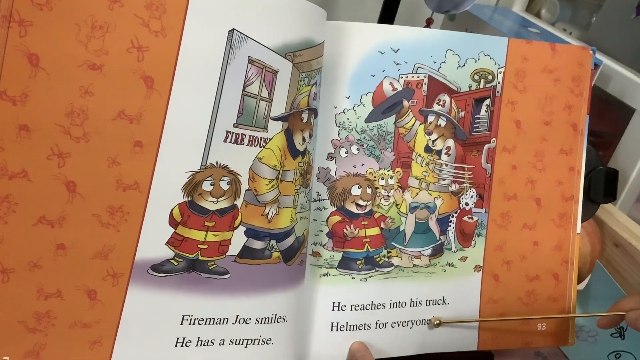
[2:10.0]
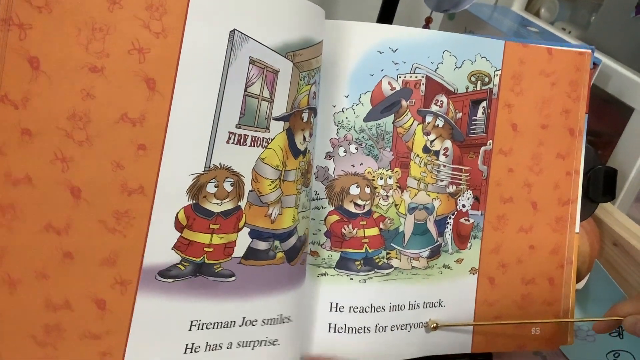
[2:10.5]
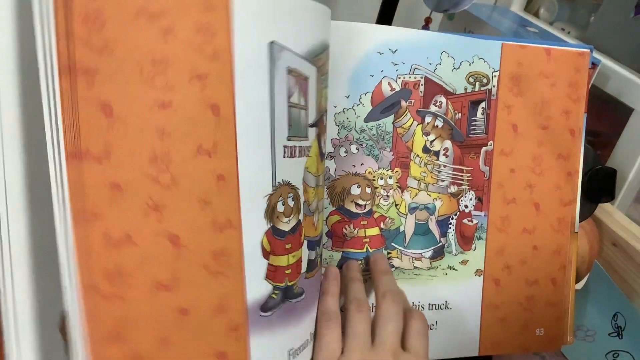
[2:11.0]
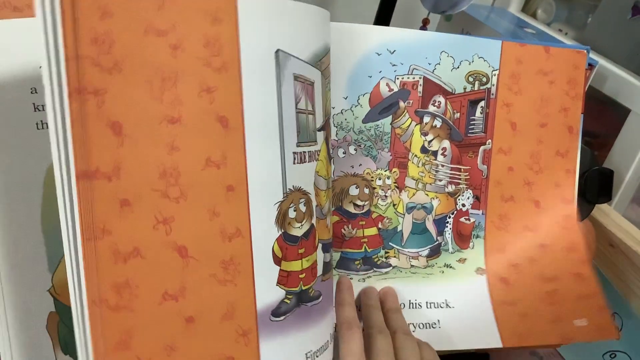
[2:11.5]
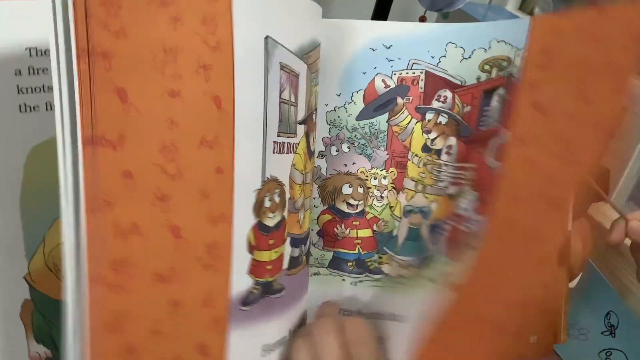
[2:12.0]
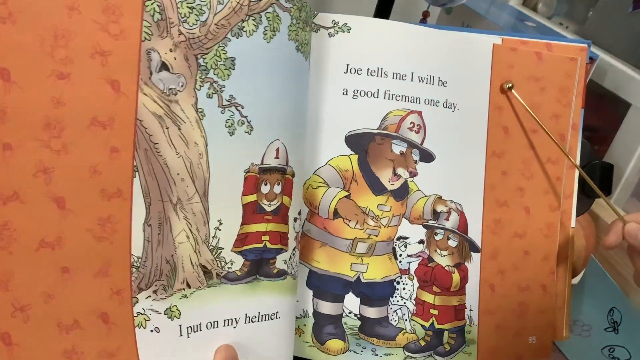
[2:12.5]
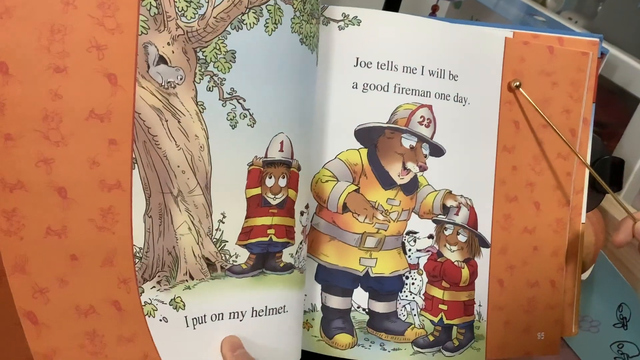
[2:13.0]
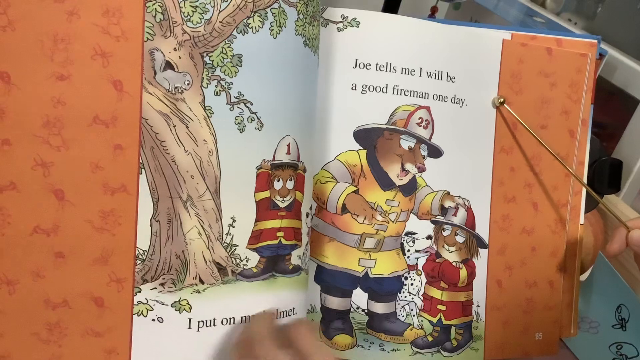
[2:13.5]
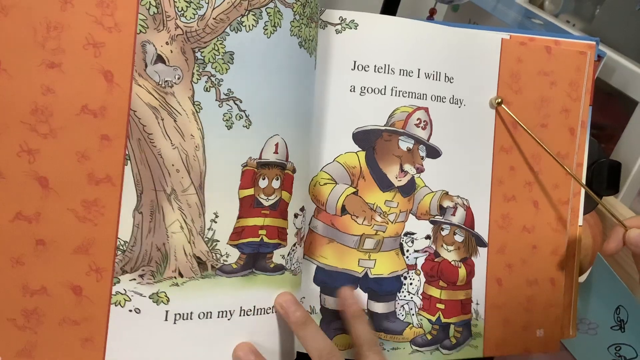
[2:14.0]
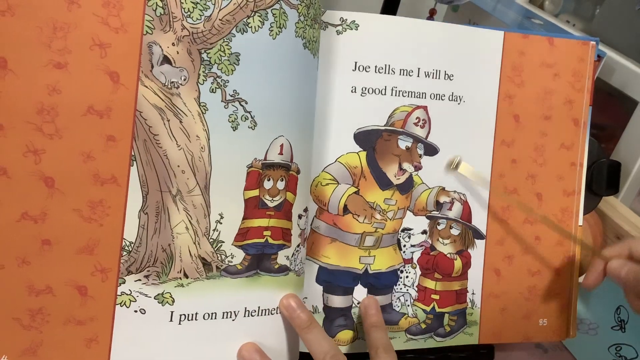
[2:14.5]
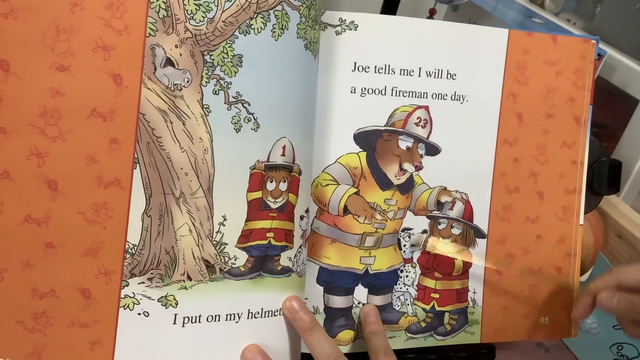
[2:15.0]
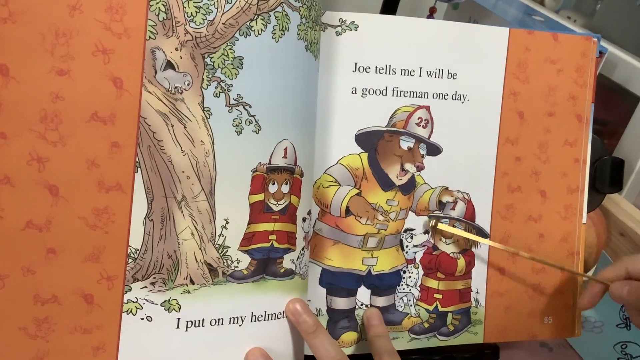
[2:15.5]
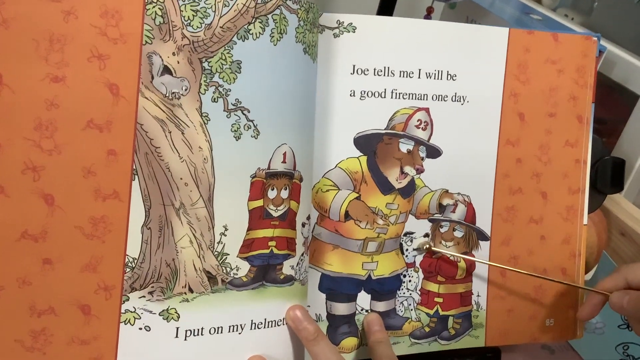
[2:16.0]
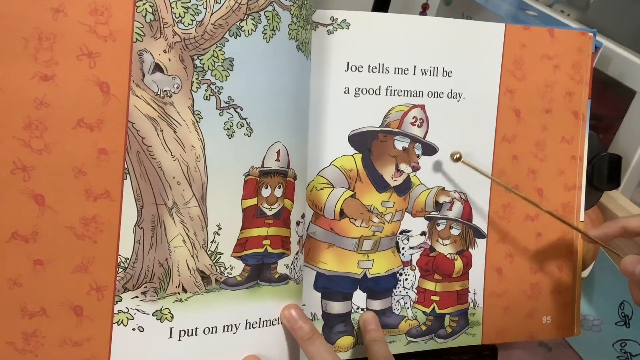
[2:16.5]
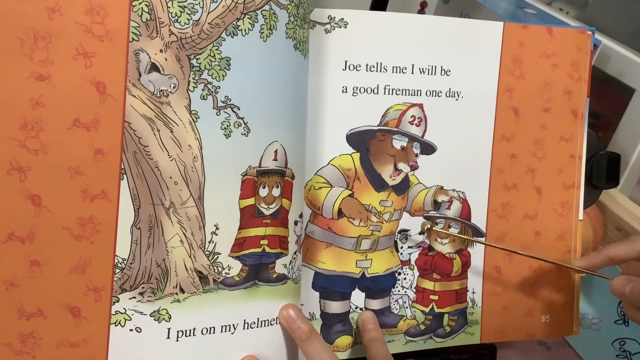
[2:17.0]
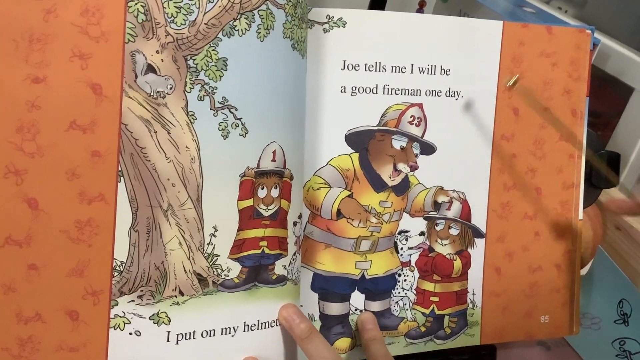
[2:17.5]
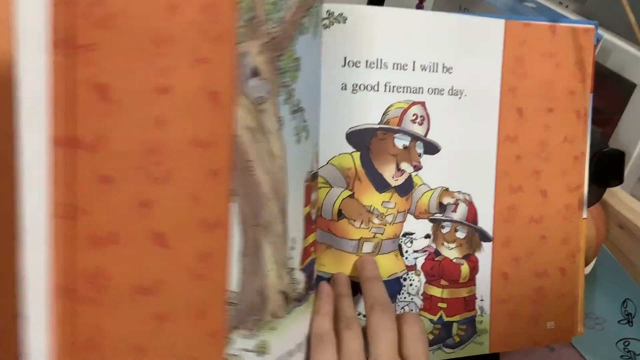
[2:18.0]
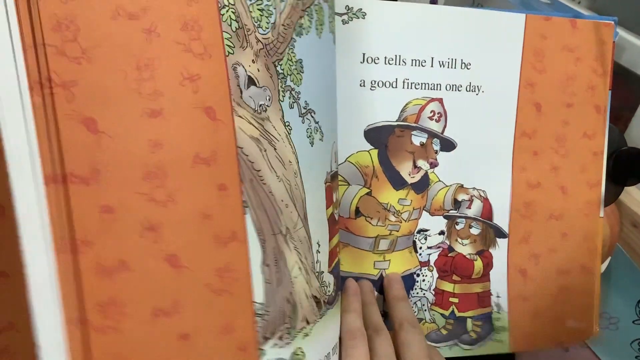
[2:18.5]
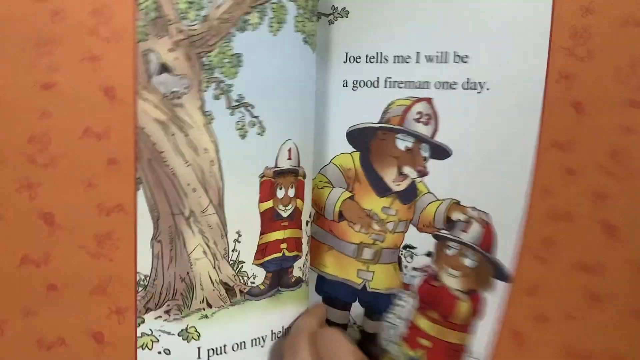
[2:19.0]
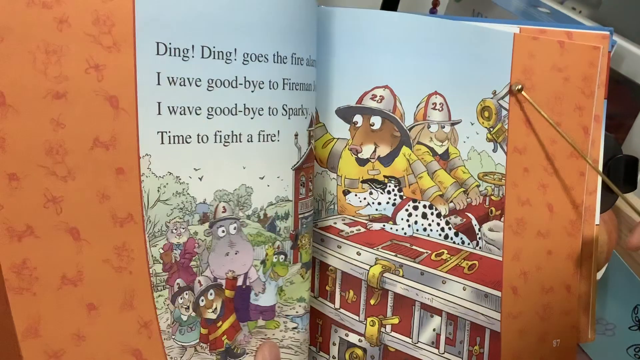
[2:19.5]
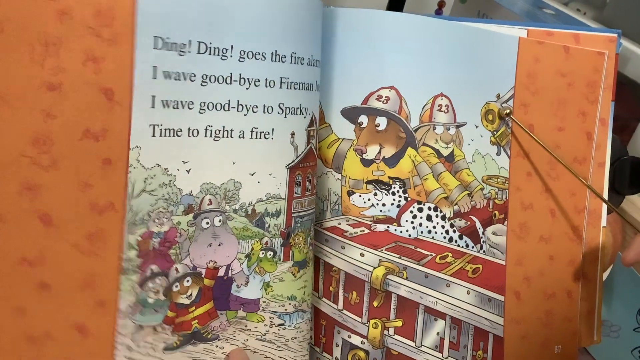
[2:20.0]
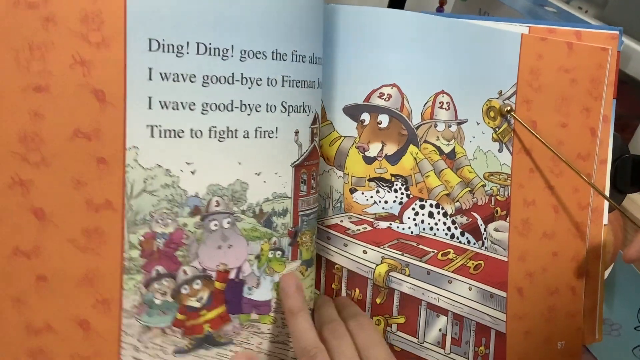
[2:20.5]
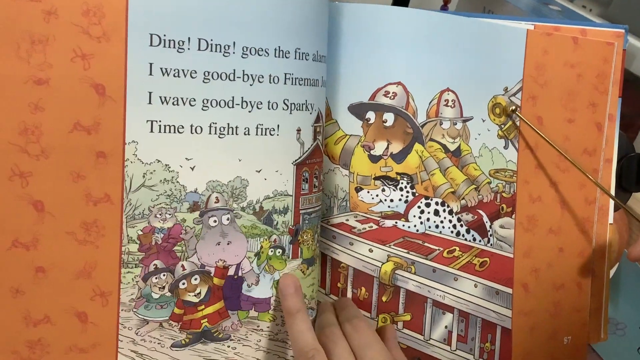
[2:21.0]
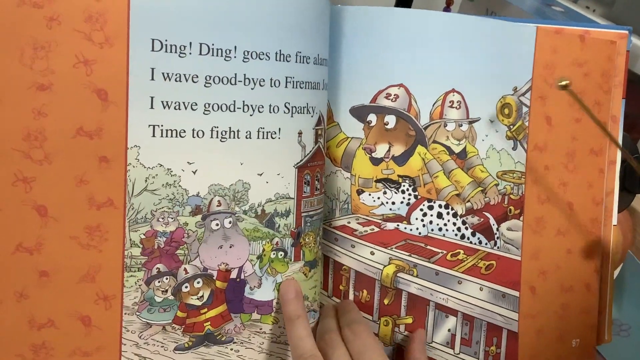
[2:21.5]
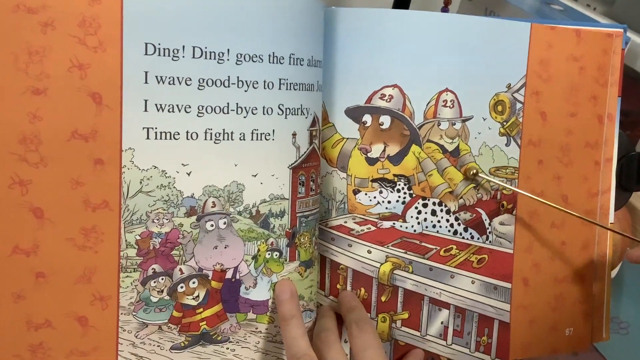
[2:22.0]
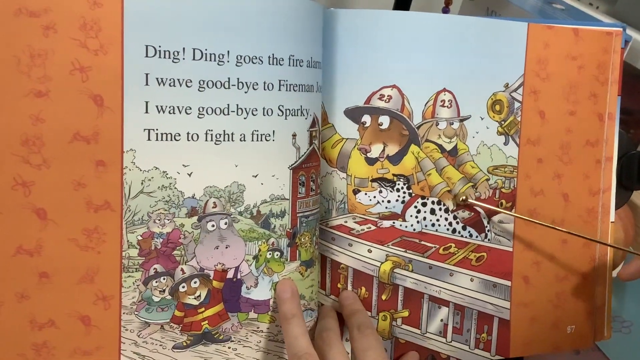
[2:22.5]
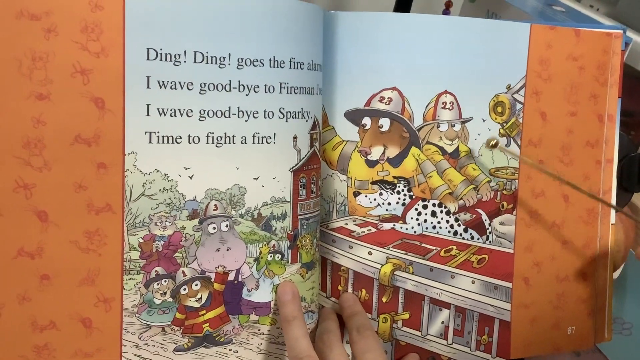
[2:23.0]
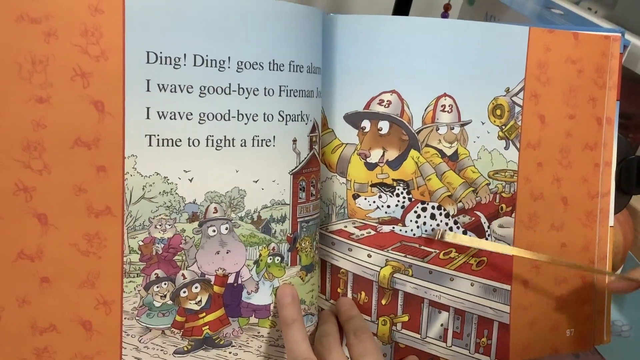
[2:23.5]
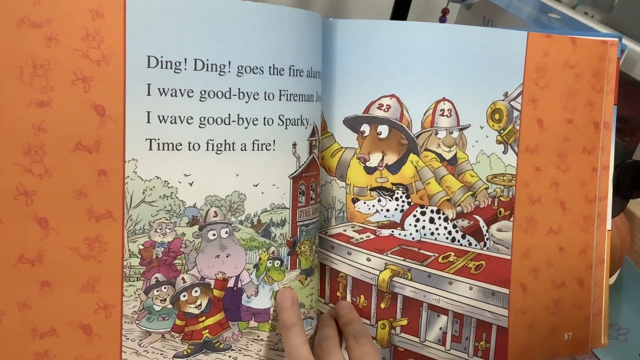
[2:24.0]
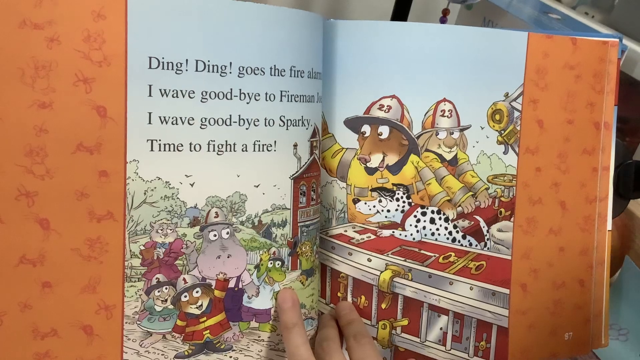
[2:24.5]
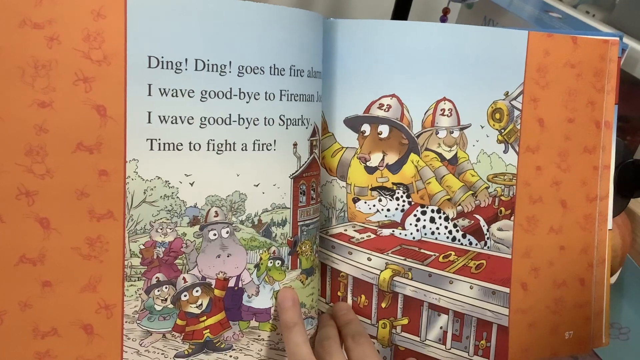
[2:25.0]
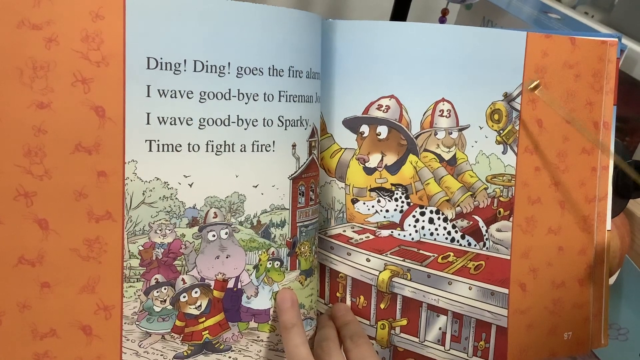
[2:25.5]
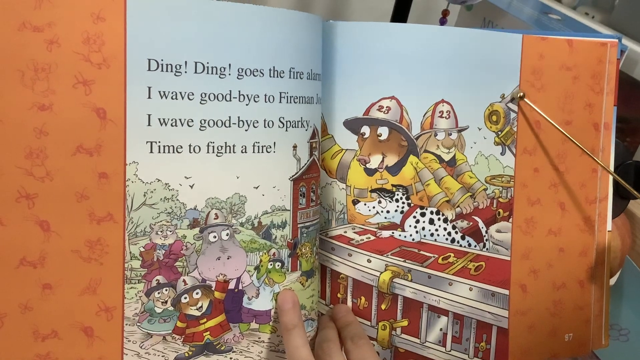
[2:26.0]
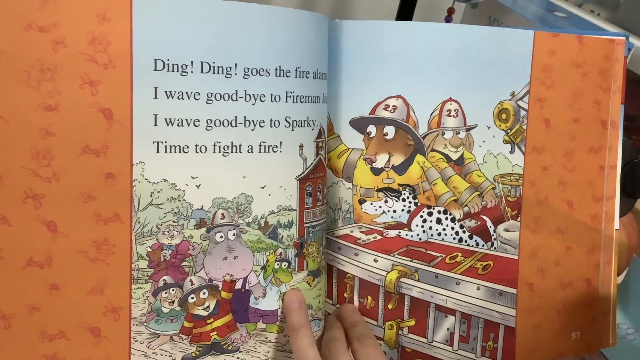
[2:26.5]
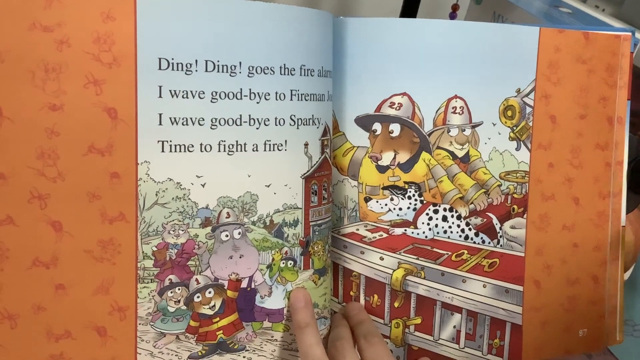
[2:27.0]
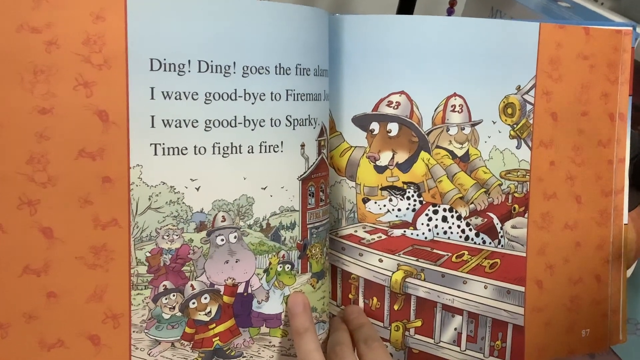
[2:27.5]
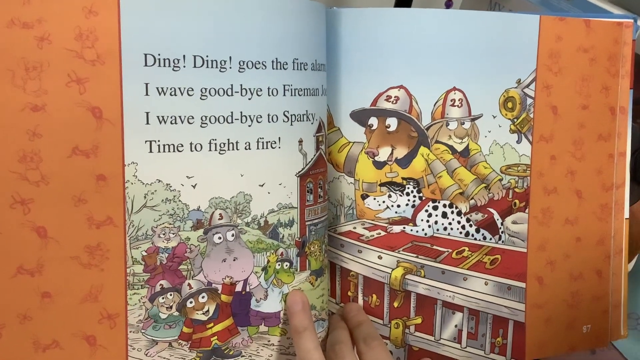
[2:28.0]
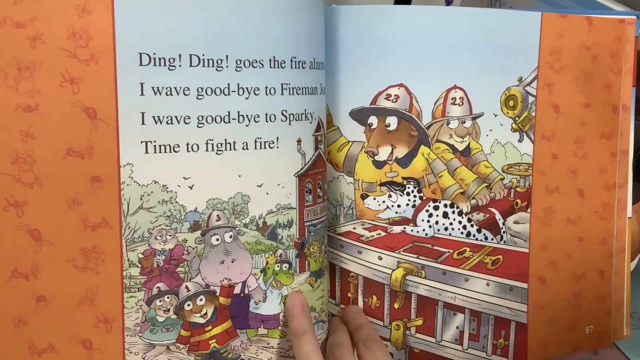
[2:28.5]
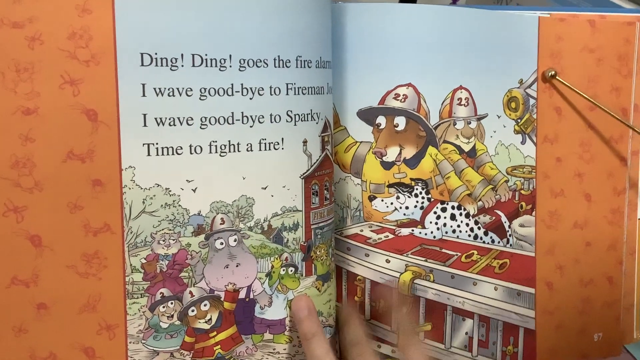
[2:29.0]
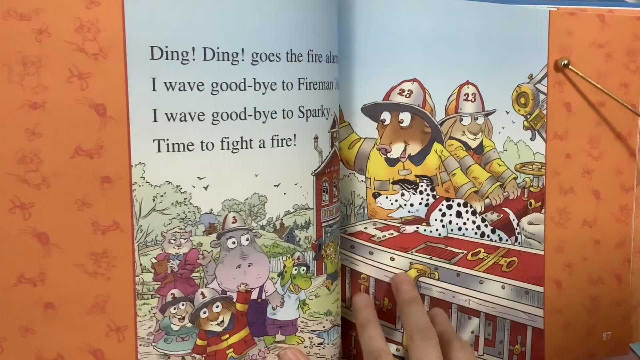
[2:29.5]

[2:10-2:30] The next page is set outside: there is a tree with a squirrel in it, and the dog child is stood looking up at the squirrel. The text on the page says, "I put on my helmet." The next page has the fireman bear and the dog child; the fireman bear has put his hand on his head. A Dalmatian dog in the background is licking the fireman child on the cheek. The text says, "Joe tells me I will be a good fireman one day." The following page is another outdoor scene with multiple firemen: a rabbit adult fireman and the bear fireman sat in the fire truck. The whole class of animal children and the cat teacher are waving them off. The text on the screen says, "ding ding goes the fire alarm. I wave goodbye to fireman. I wave goodbye to Sparky. Time to fight a fire."